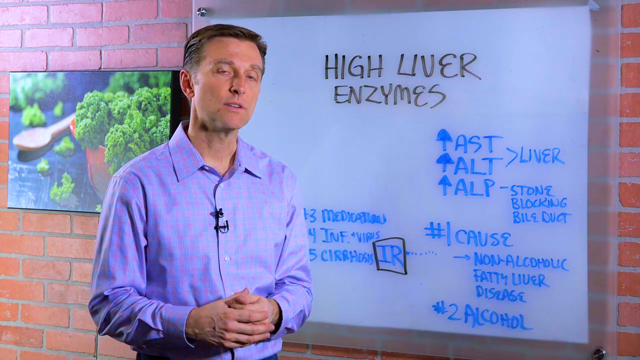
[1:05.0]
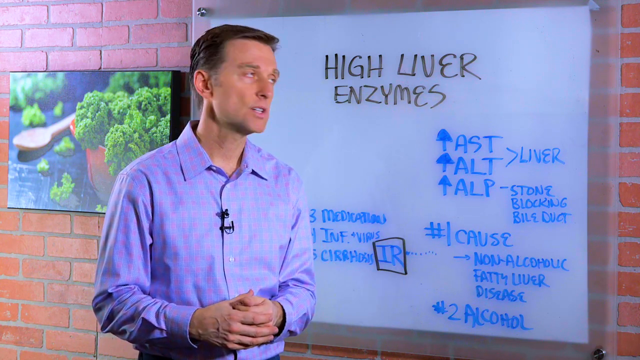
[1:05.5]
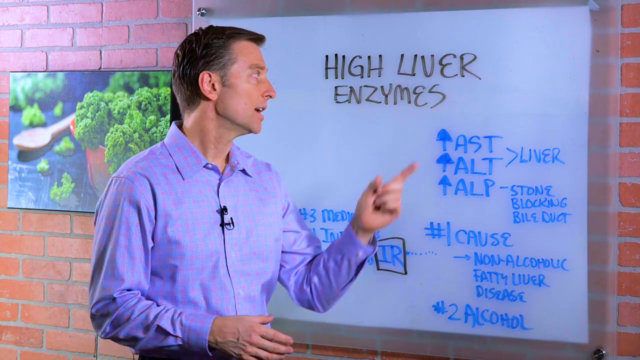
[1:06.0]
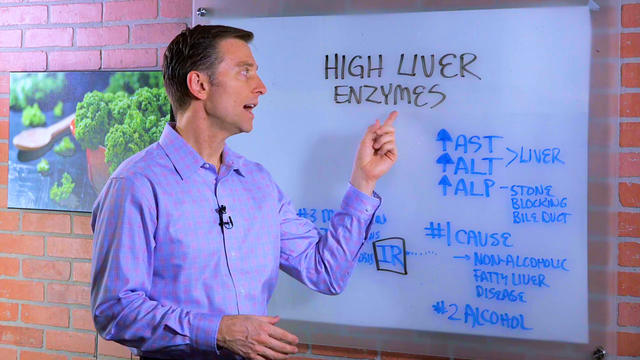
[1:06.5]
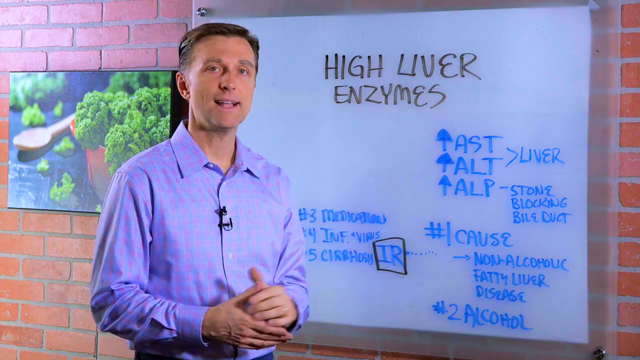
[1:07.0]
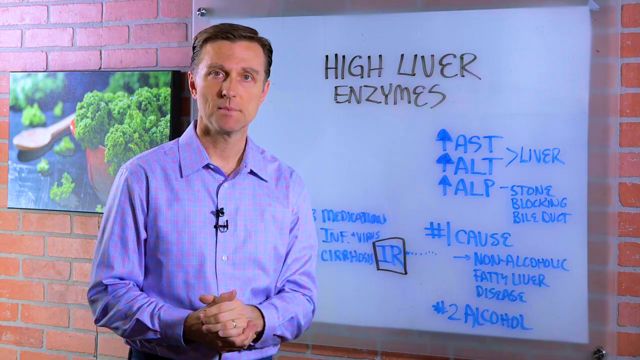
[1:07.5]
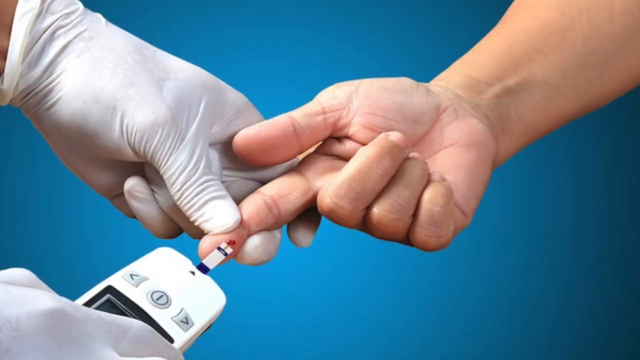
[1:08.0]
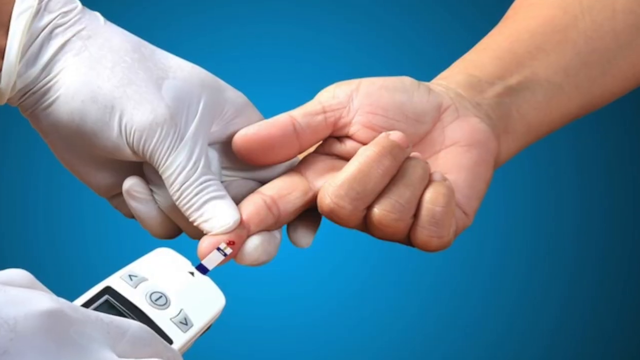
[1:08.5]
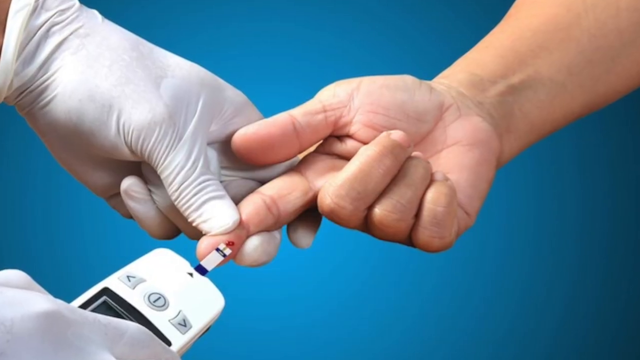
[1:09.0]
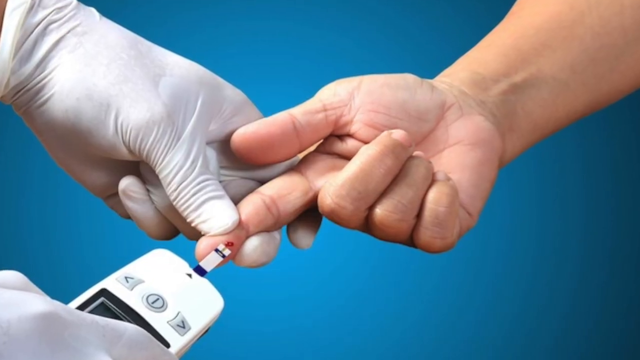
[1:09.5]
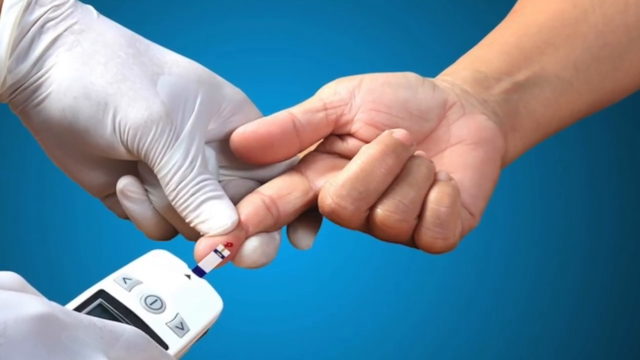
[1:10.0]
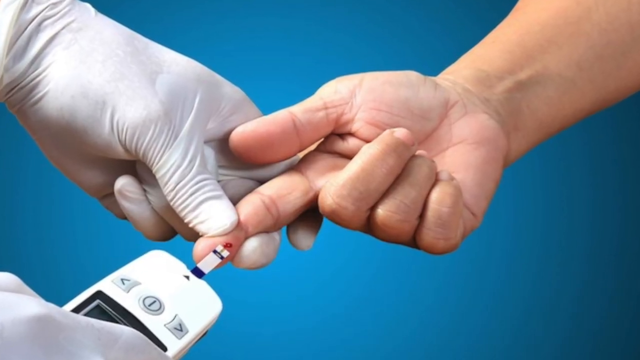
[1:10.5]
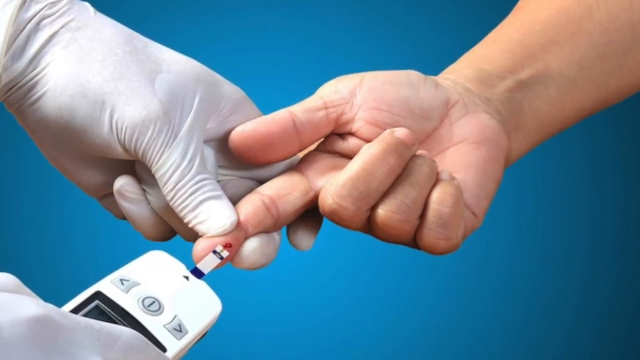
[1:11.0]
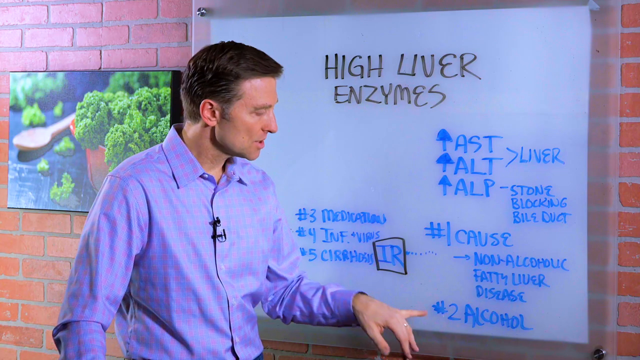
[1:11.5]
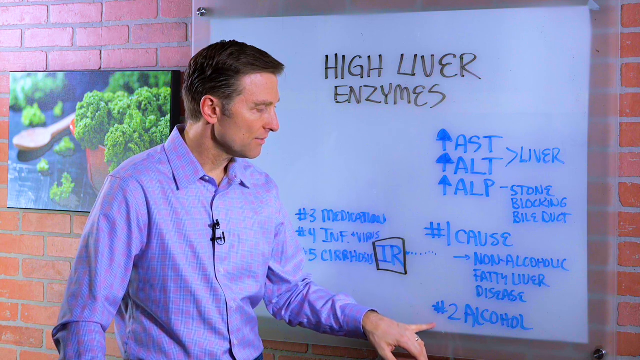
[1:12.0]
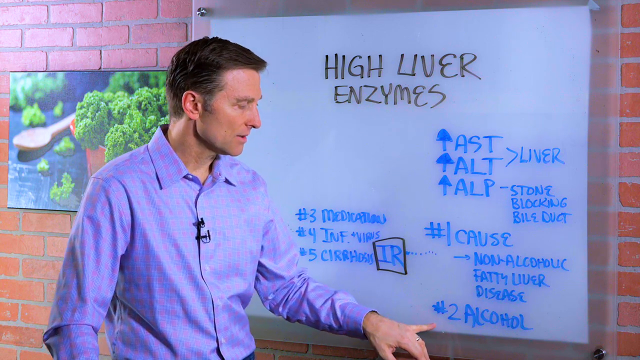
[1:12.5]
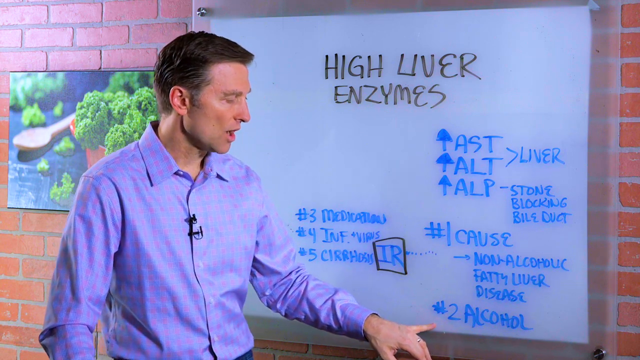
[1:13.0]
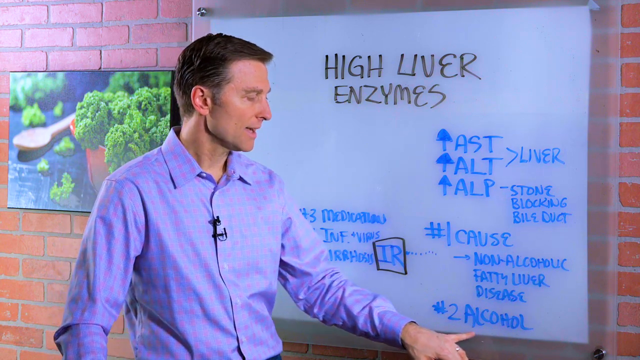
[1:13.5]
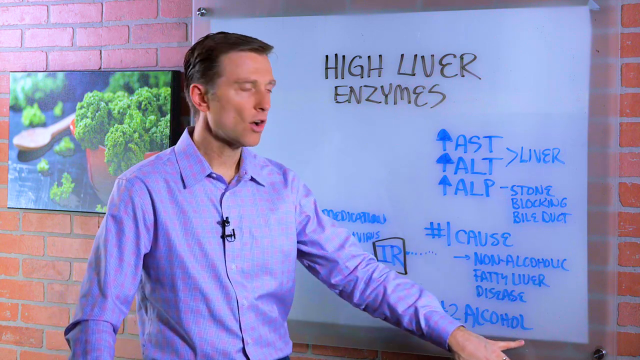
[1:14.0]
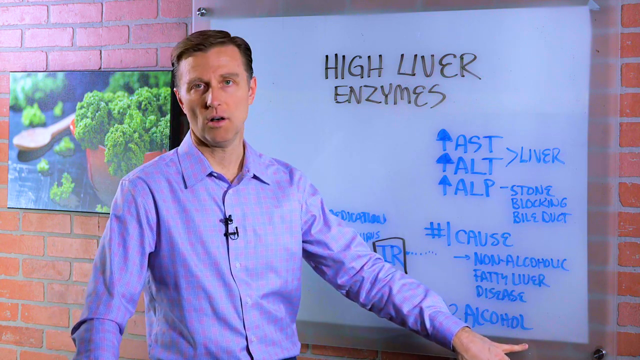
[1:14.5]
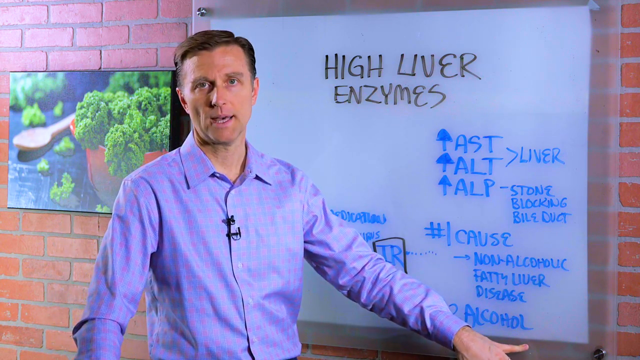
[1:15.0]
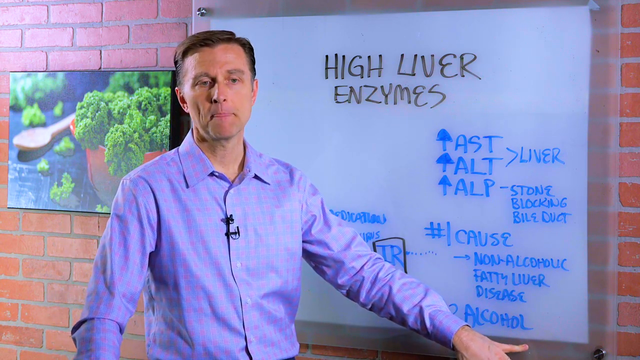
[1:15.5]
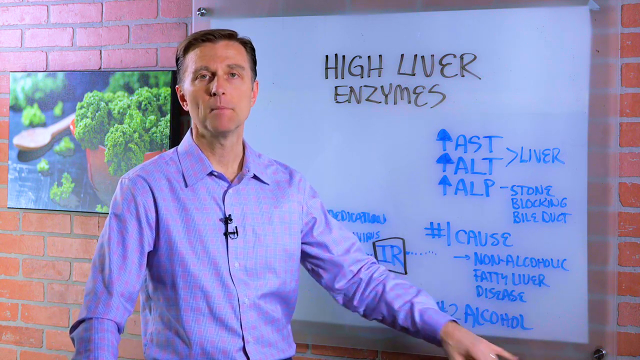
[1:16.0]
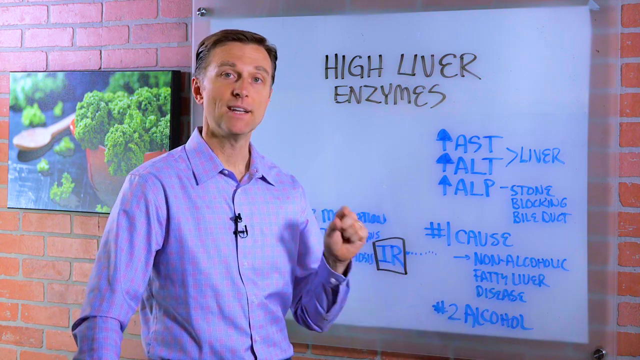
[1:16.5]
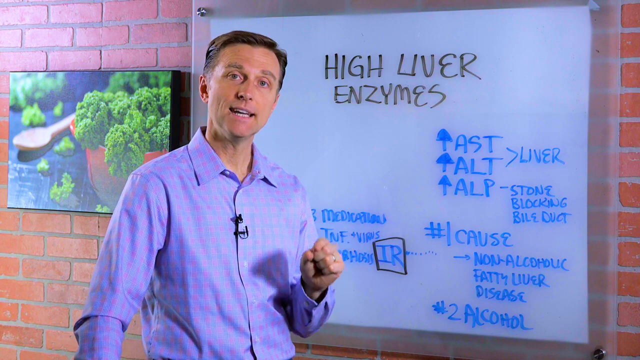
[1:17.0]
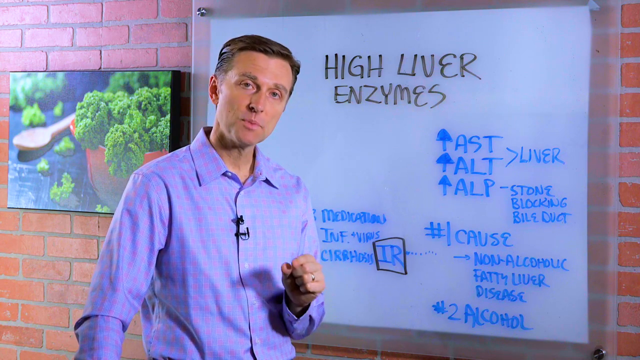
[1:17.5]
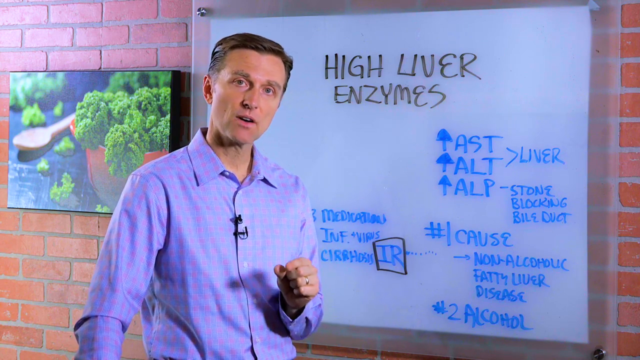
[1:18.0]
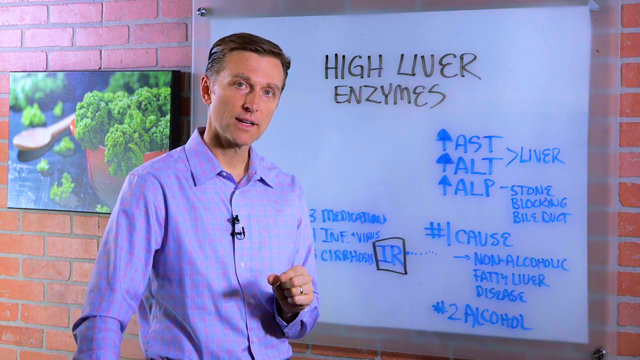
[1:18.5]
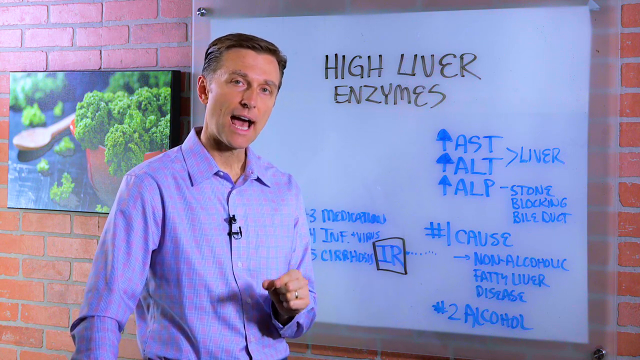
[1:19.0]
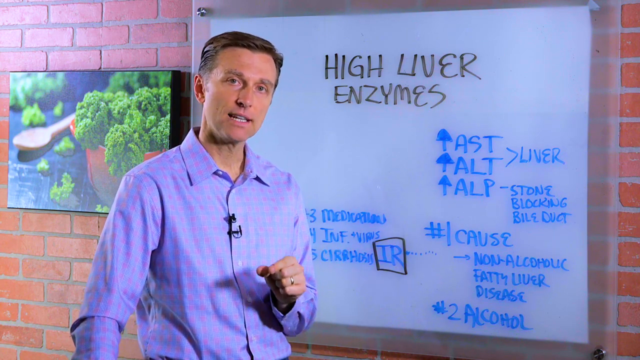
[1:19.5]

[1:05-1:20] The man points to "high liver enzymes." A still image of a hand with the index finger pointed out appears. The camera returns to the man, who underlines "number 2, alcohol." He points to "alcohol" with his small finger, gestures with his index finger, and points to "high liver enzymes." A medical gloved hand holds an insulin monitor, drawing blood from another hand. The camera goes back to the man, who points at "number 2, alcohol," gestures with his left hand, and points to "high liver enzymes." He repeatedly points at "alcohol" with his small finger and then at "enzymes" with his index finger. A picture shows a blood draw from an index finger with a glucose monitor on a blue background, and there is blood on the hand of the person whose blood is being drawn.